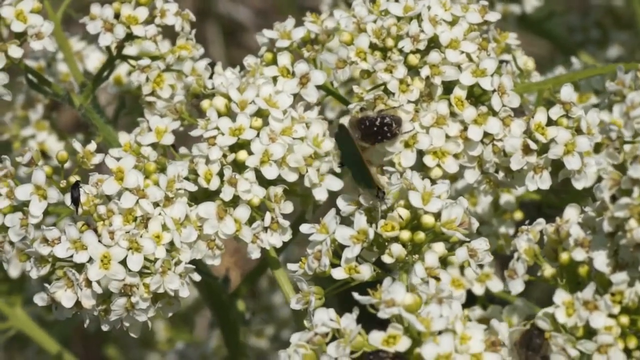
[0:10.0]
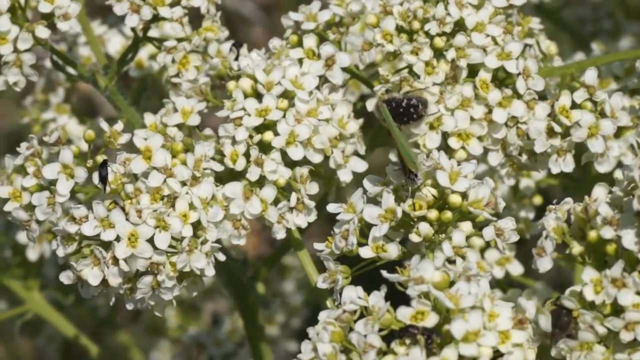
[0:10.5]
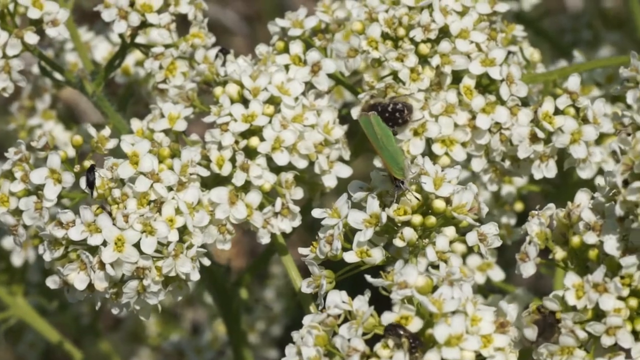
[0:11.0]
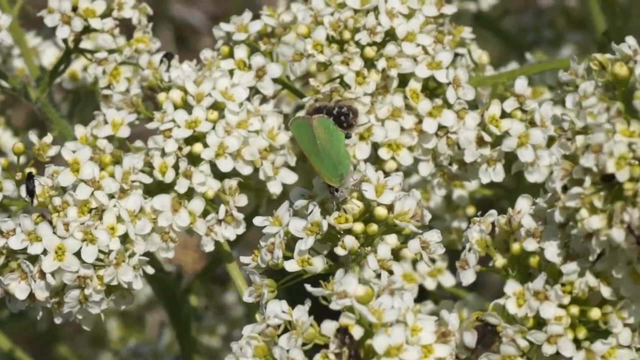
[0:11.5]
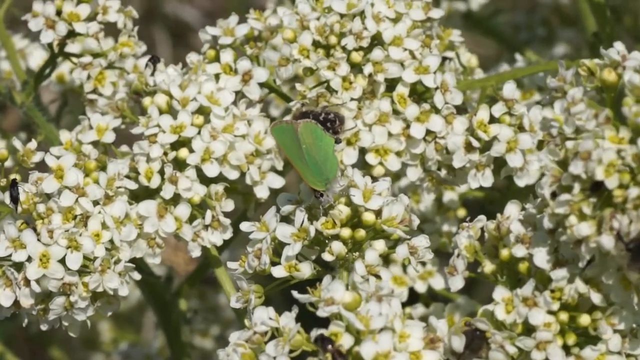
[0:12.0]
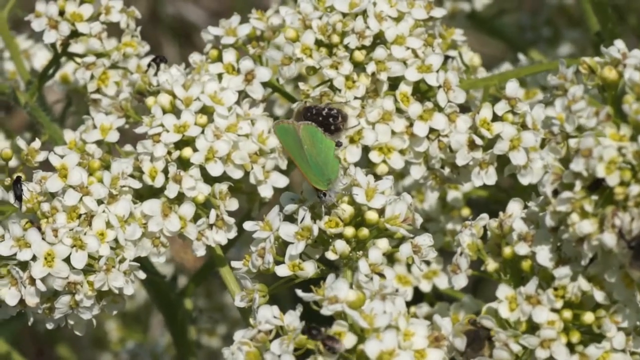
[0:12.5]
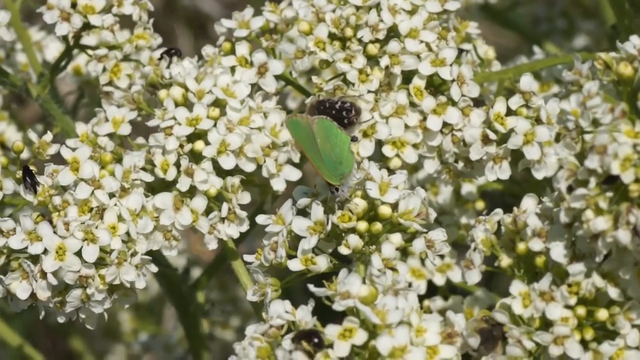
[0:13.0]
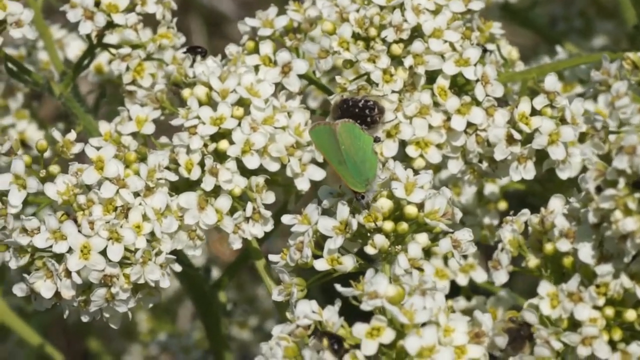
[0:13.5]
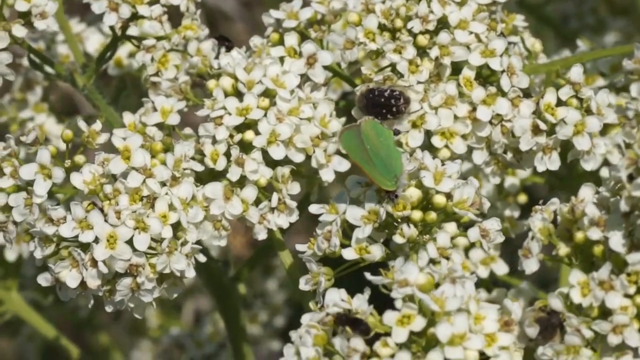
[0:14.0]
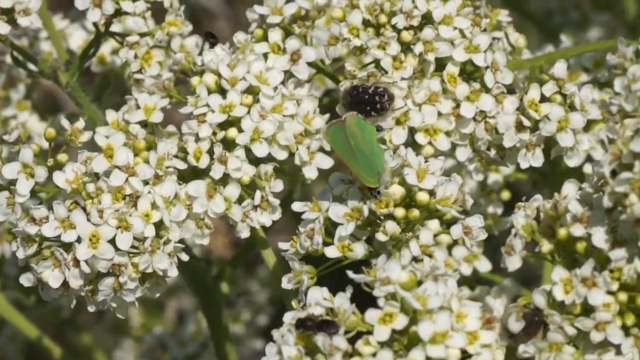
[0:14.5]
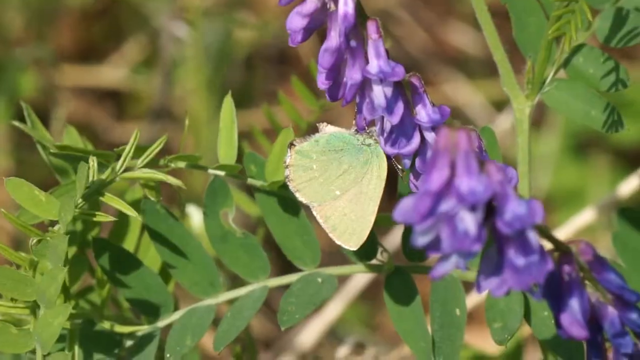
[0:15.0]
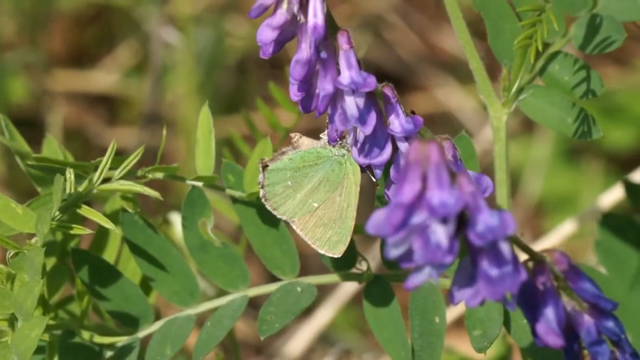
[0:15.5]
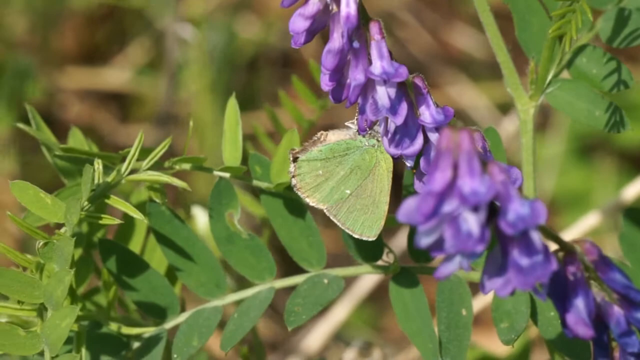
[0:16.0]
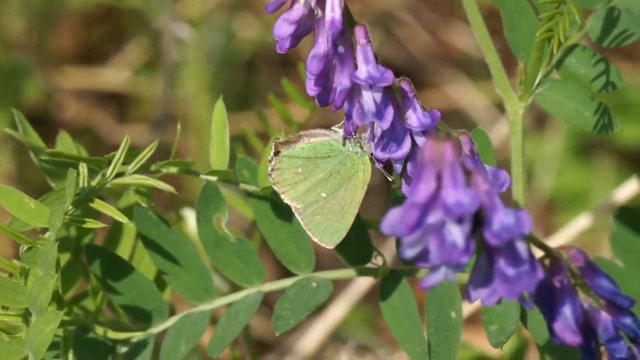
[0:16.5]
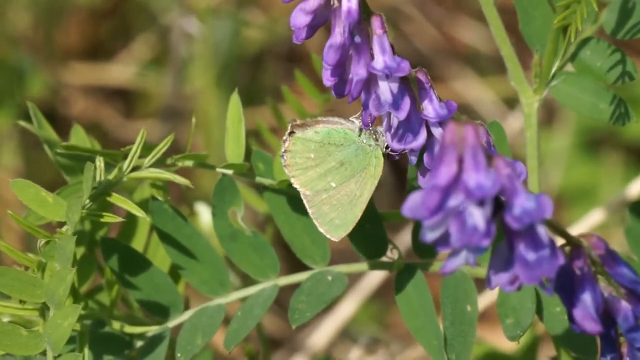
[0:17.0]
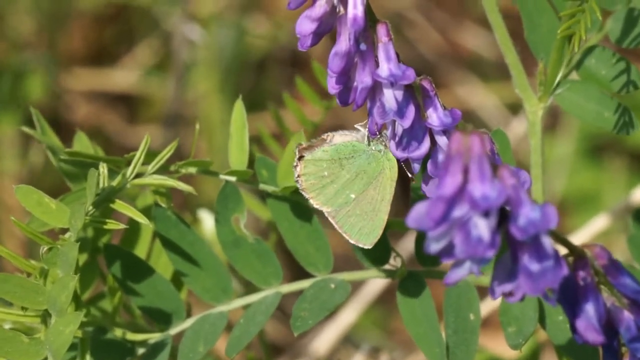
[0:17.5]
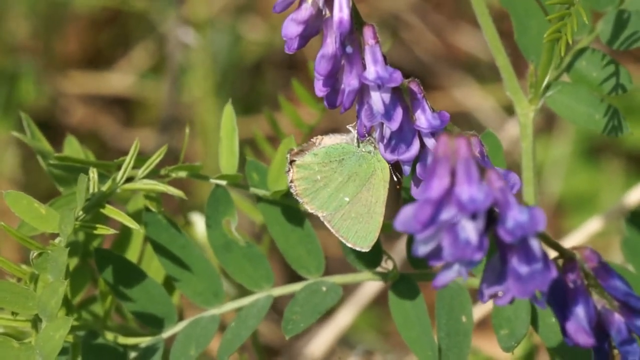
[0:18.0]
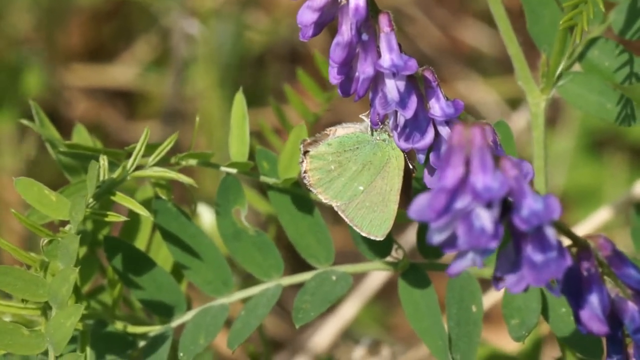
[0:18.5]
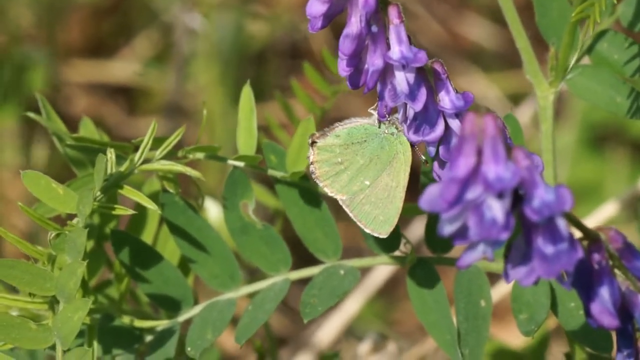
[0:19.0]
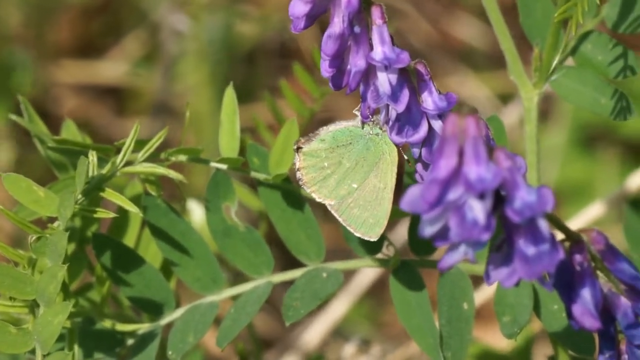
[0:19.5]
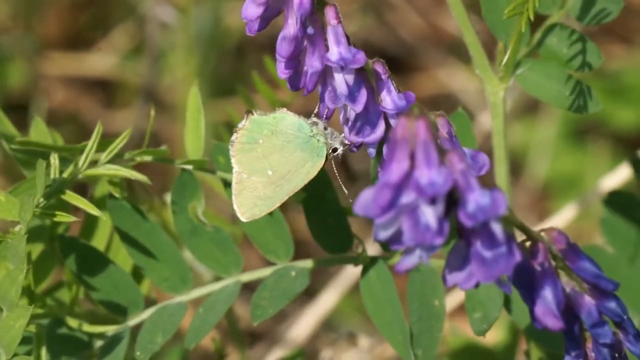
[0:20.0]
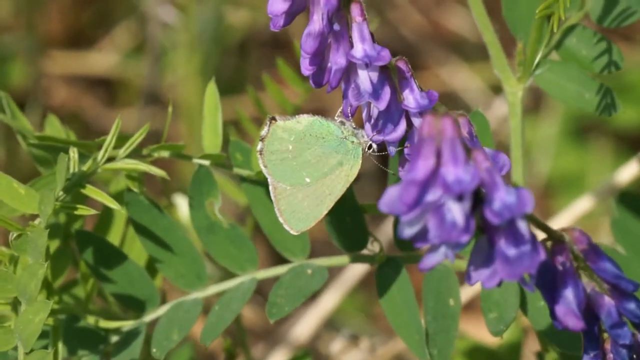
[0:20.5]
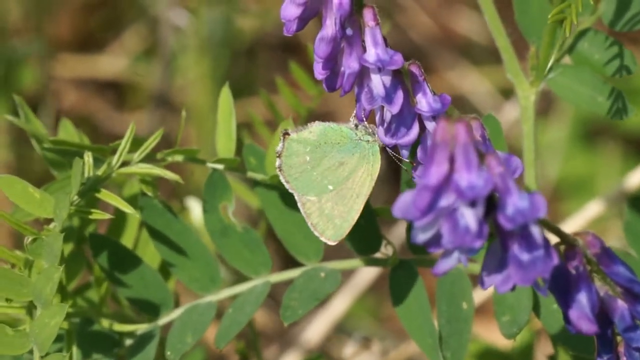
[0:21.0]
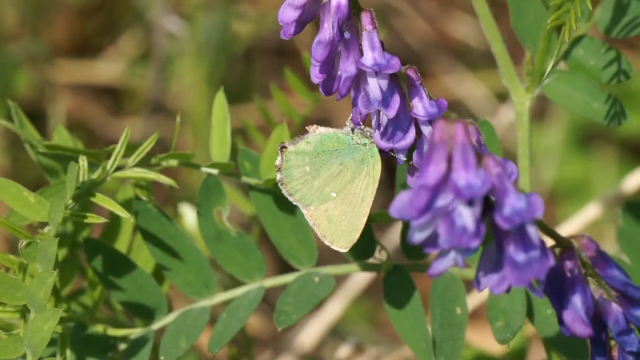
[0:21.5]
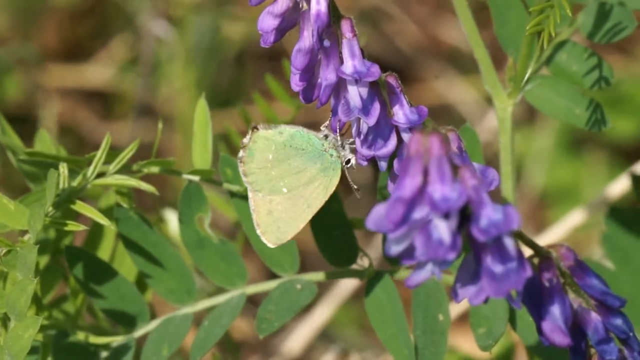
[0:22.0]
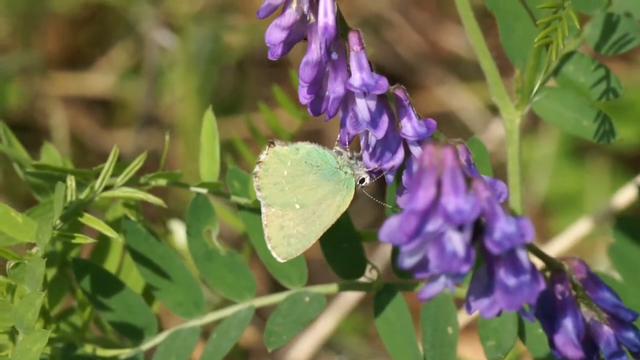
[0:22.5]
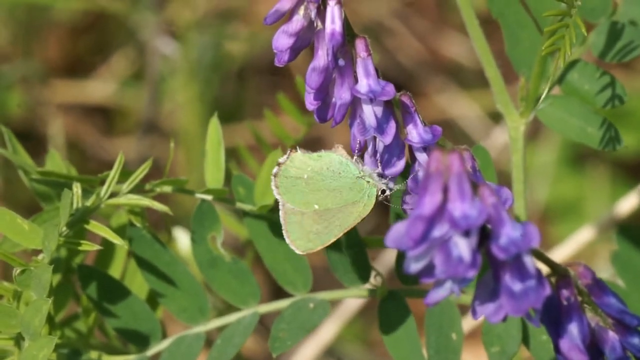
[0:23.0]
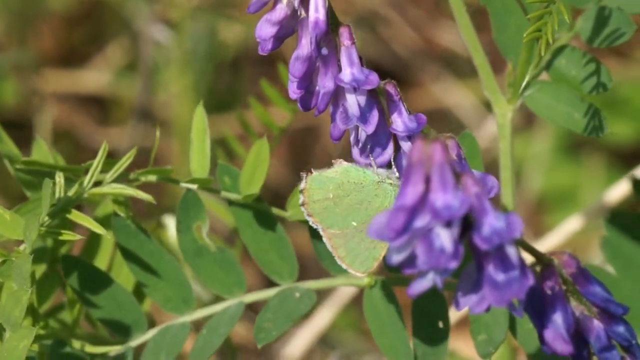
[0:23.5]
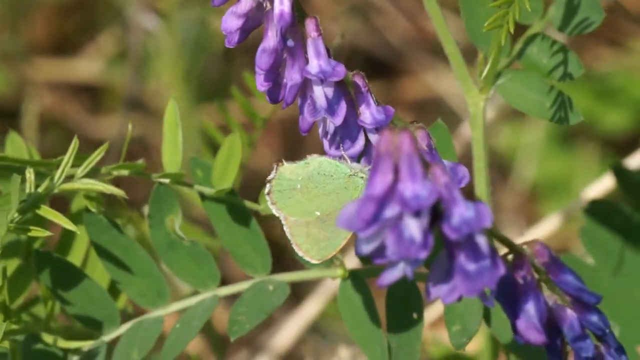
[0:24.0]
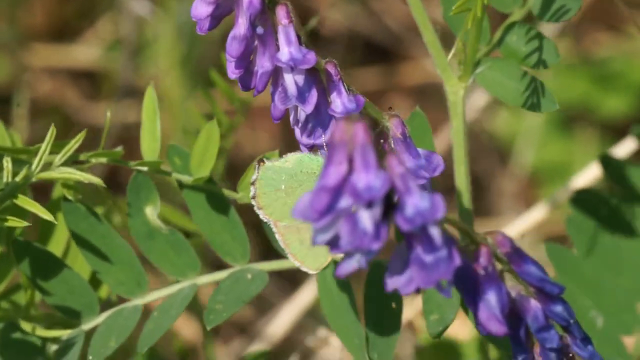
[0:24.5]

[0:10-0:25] White flowers are in clumps, and small green things that look like butterflies have their heads down as if they are eating. Then a purple plant appears with what look like tiny bells hanging off it, on a single stem. A green butterfly in the middle of the screen moves its legs, and its small head moves in and out of the flowers behind the purple flowery bush, which runs in a line from the bottom right of the screen to the middle of the top left. Behind the purple flowers are leaves that look very thin, coming into branches; there are two branches on the left, and the little leaves go in toward the middle on the top right. On a stalk of the flower is a butterfly that looks green, with a little black edging. More items are on the right. When the view goes back to the white flowers, the item at the top actually looks like a bug crawling, with white lights on its tail.